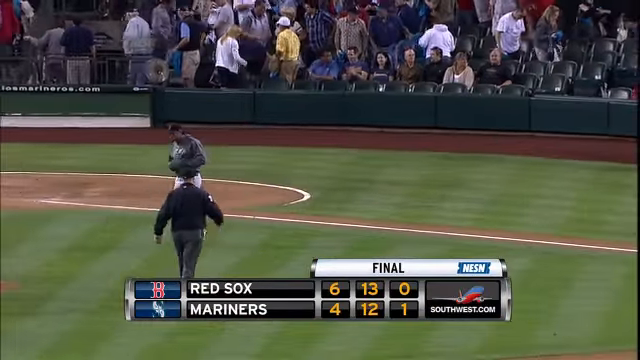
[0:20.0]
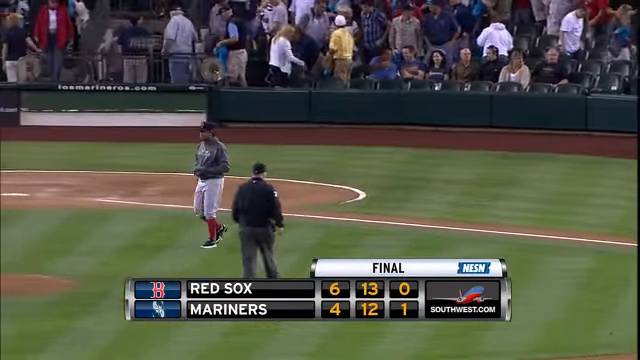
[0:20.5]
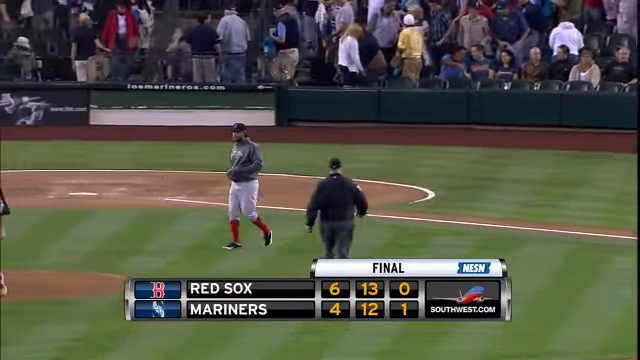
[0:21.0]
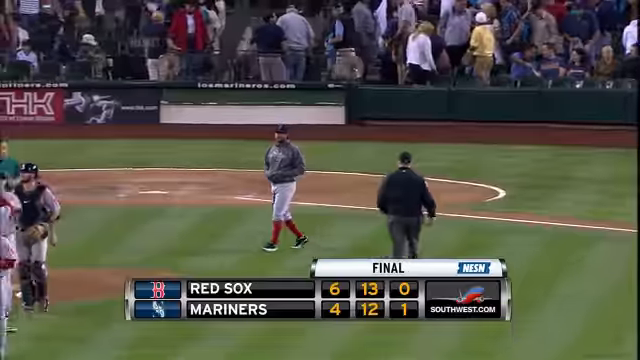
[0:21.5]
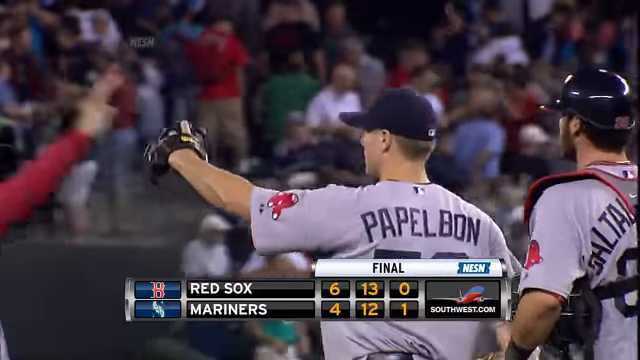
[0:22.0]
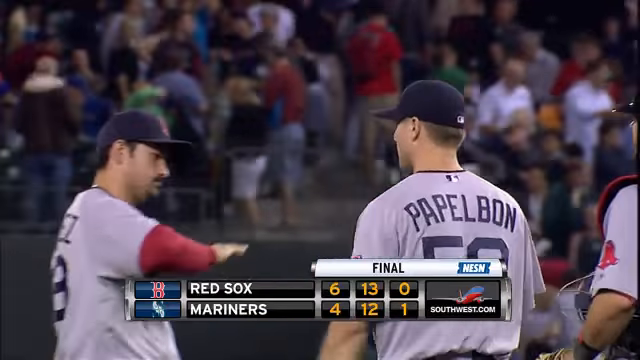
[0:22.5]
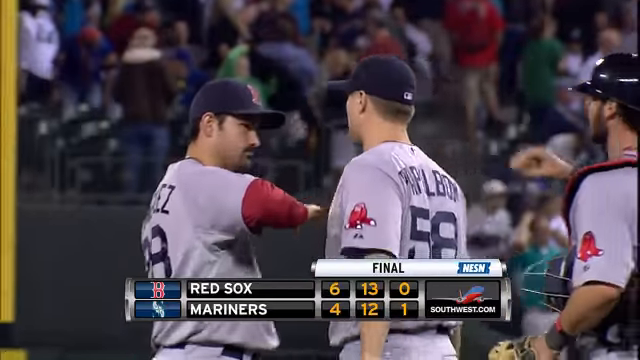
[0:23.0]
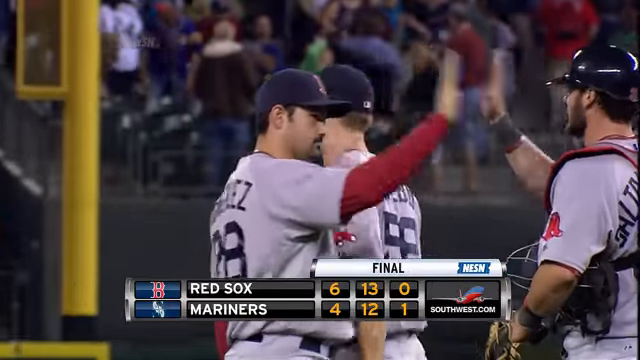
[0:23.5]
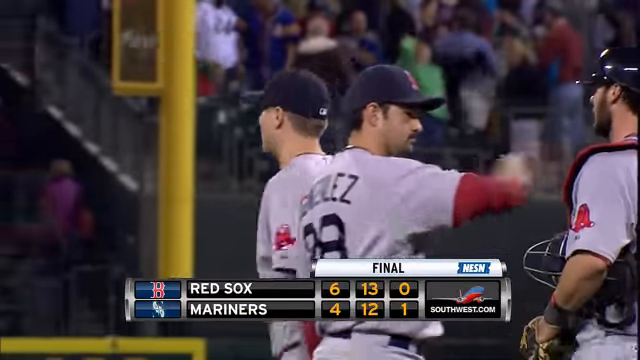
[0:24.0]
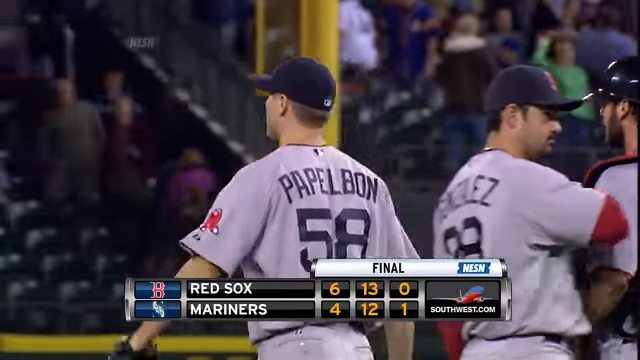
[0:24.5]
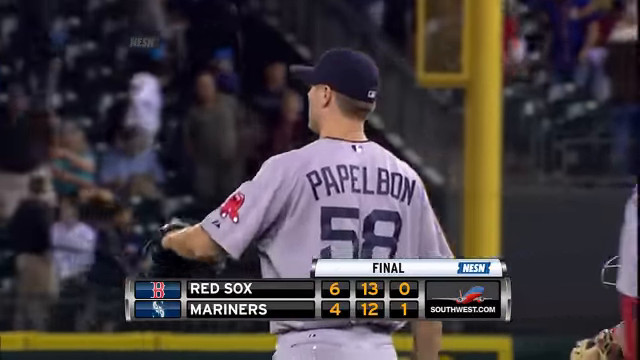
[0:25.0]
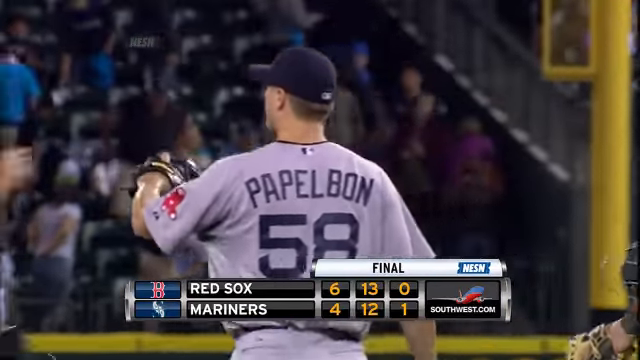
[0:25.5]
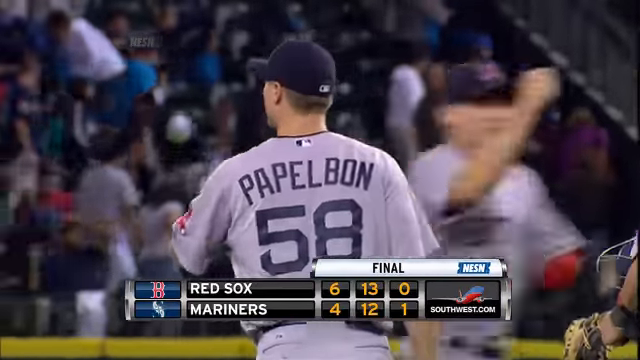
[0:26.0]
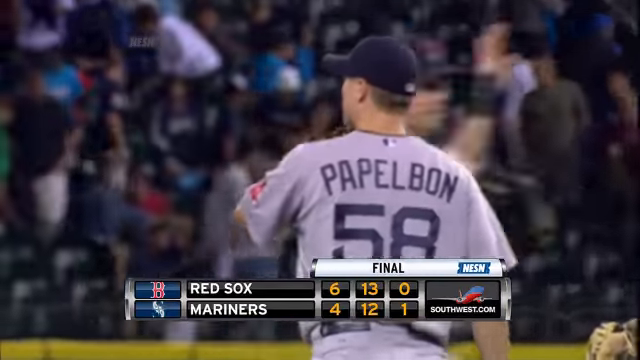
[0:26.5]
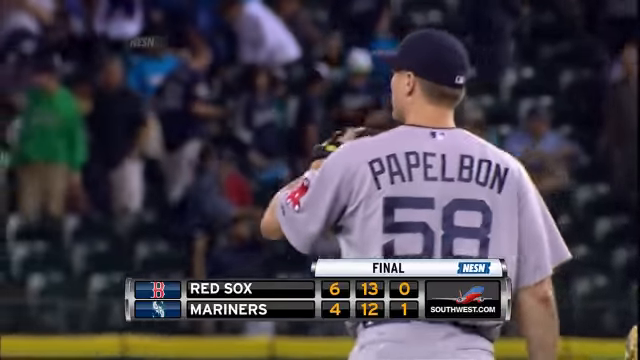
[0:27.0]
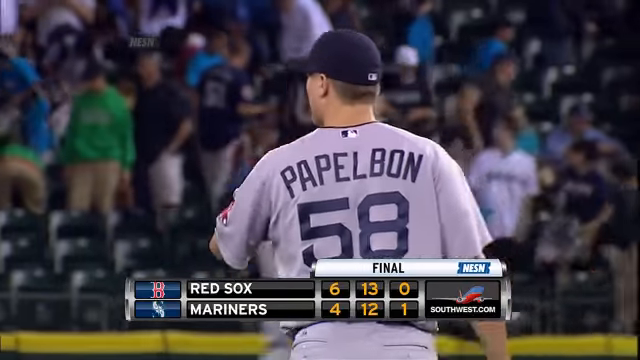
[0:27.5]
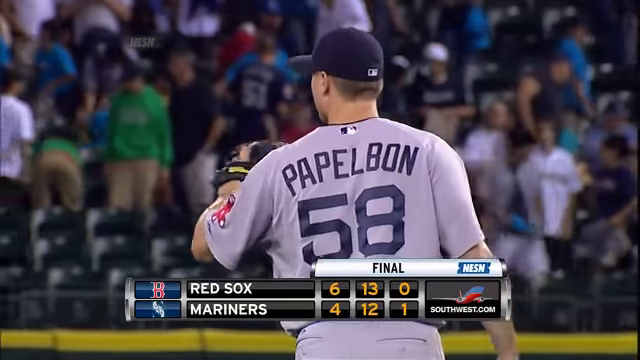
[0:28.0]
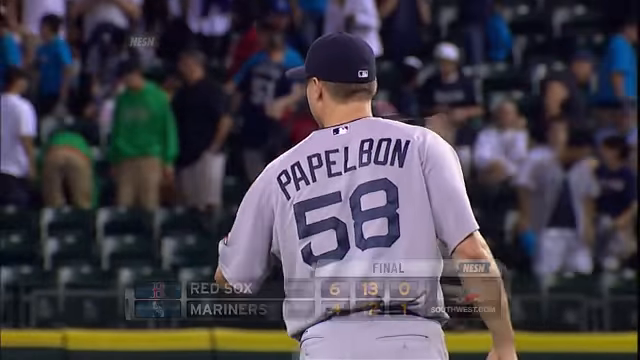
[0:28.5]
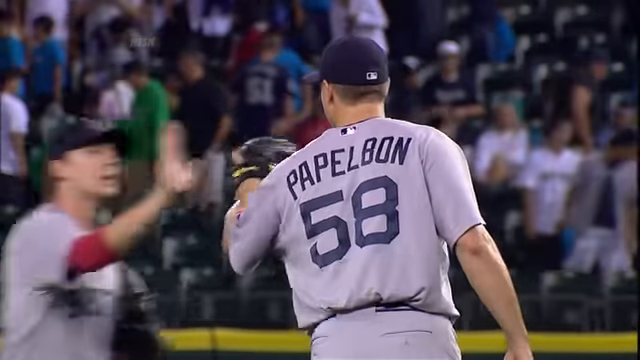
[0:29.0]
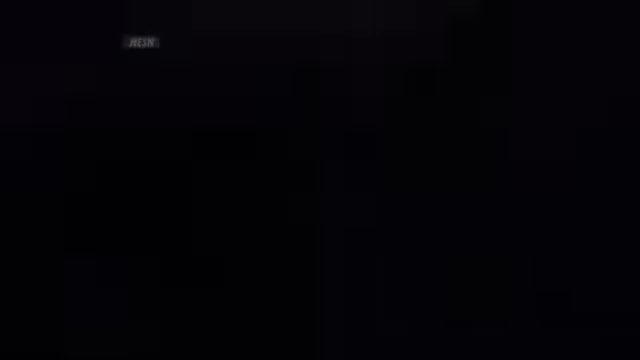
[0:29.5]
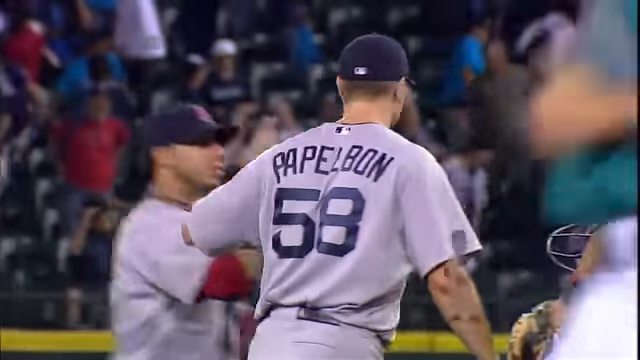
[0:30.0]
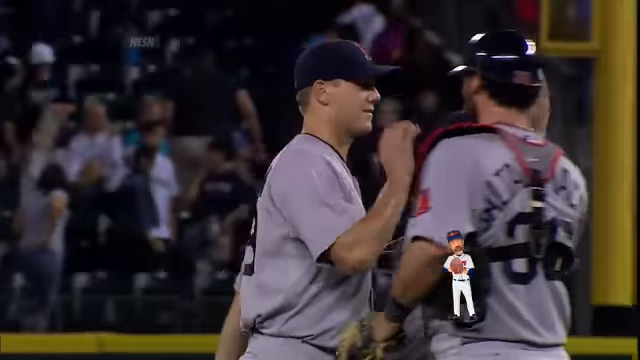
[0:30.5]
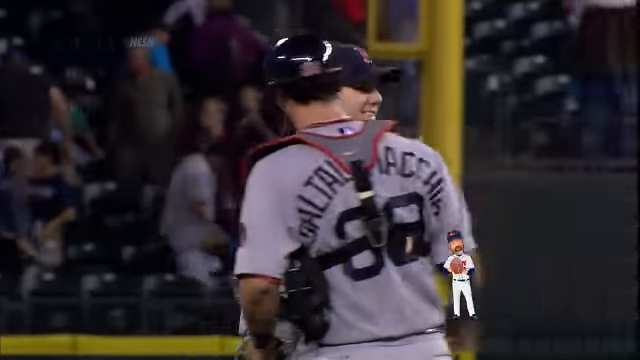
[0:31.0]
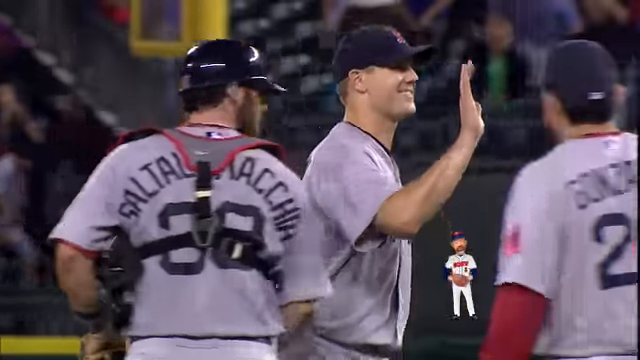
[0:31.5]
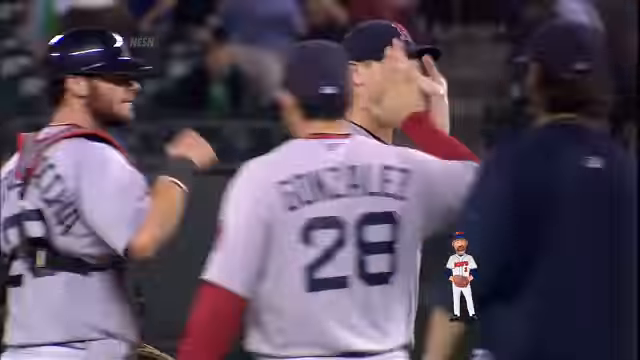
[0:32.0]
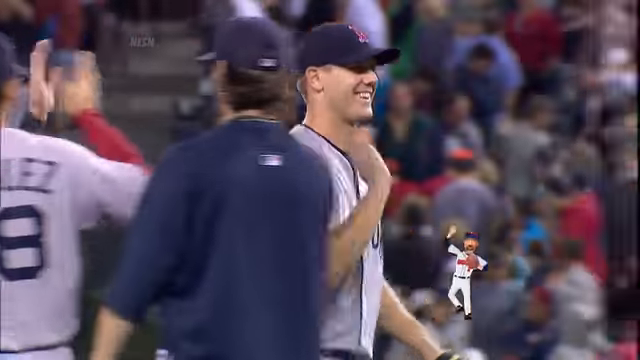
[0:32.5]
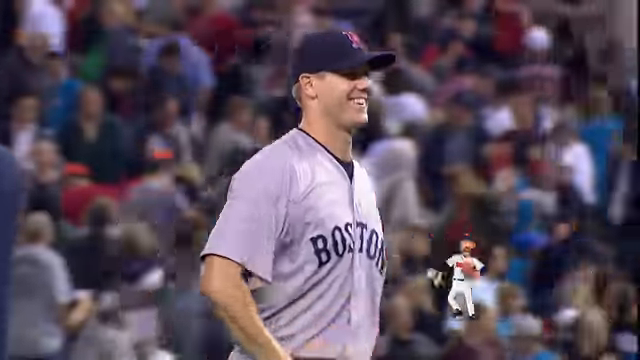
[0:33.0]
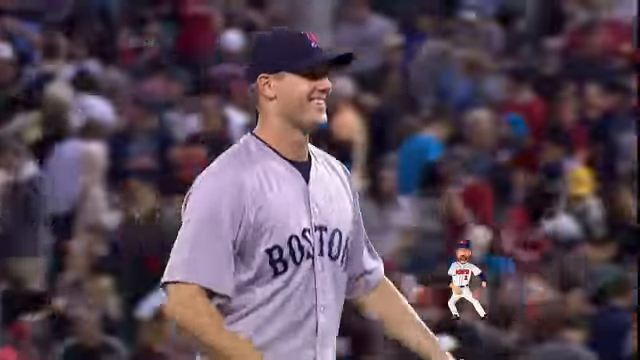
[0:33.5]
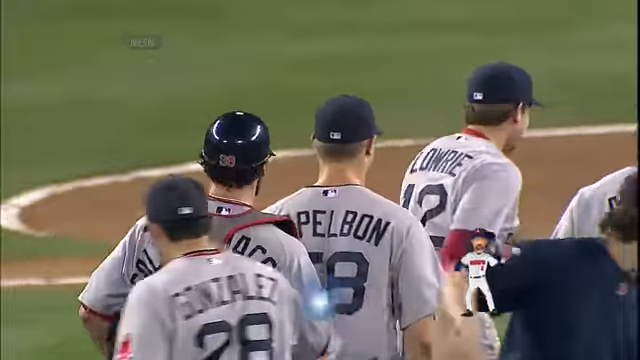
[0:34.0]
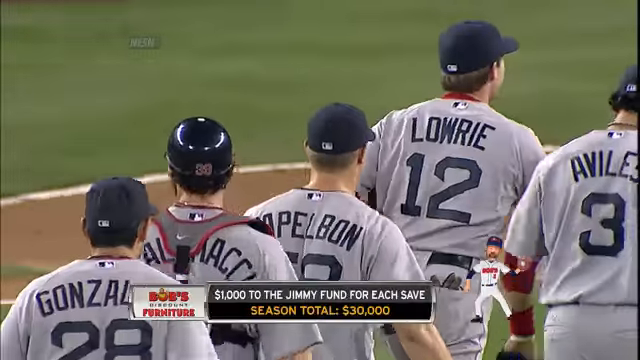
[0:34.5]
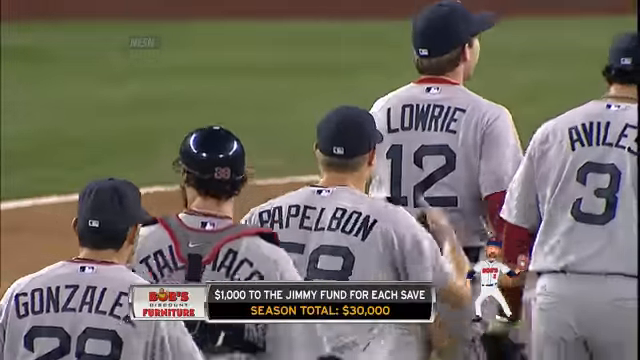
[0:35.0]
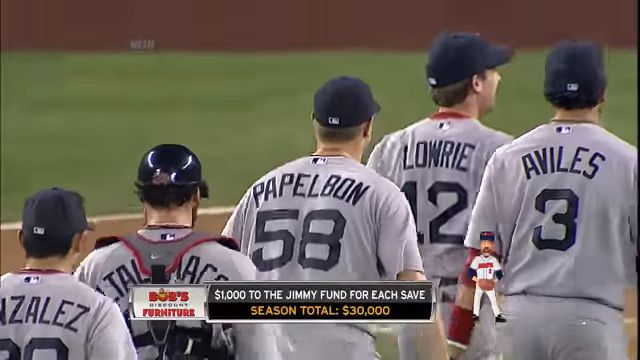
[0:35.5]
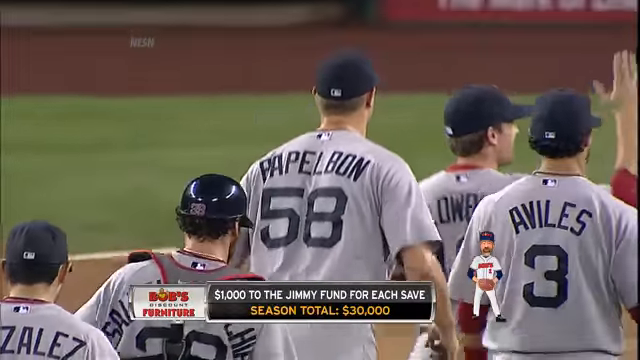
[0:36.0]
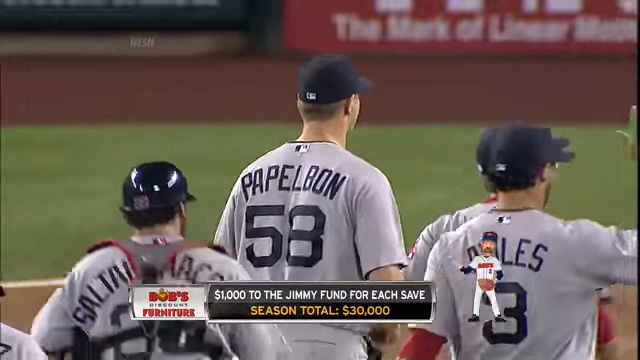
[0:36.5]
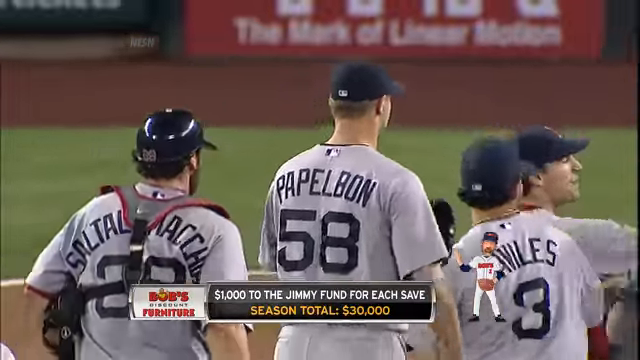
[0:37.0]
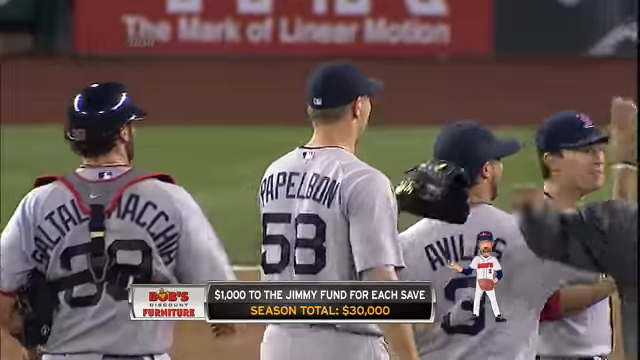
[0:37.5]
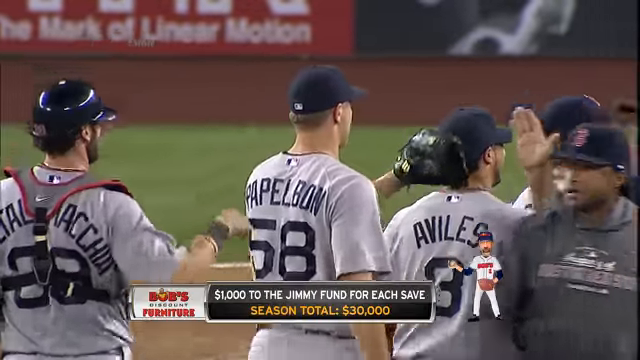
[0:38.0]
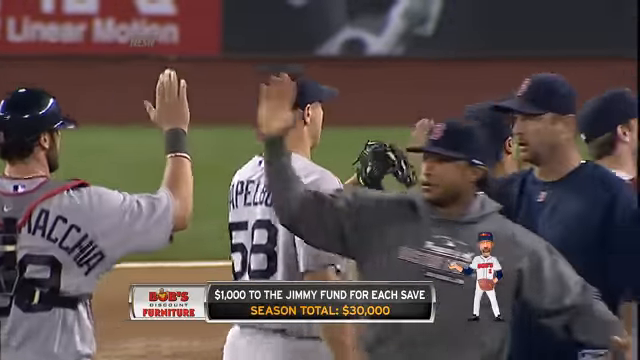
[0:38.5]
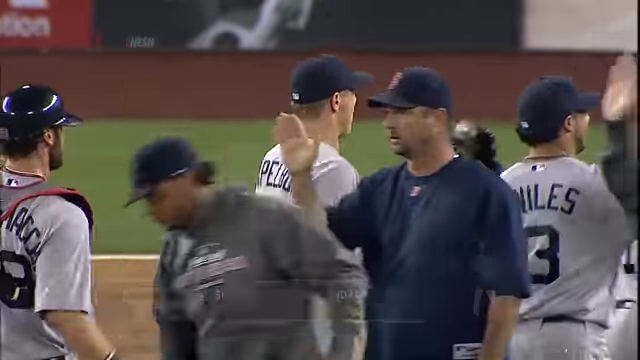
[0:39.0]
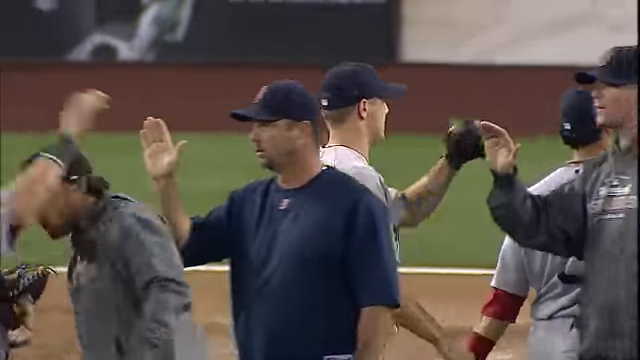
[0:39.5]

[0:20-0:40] The baseball player who was wiping his face with his sweater walks to the left side, while to the right an official walks away. The camera moves to the left and the scene changes to the pitcher walking to the left, with the catcher behind him on the right. The pitcher greets another team member who was in front of him and keeps walking to the left, bumping hands with his teammates using his gloved hand. The score remains at the bottom of the screen, then disappears as the pitcher continues bumping hands with teammates. The back of his jersey shows number 58 and the name Papelbon. The pitcher then walks to the right side, high-fiving the catcher and another teammate with his right hand, smiling as he walks. The scene changes to a group of Boston Red Sox players walking away toward the upper right, apparently in a victory line as they give high fives to their teammates.